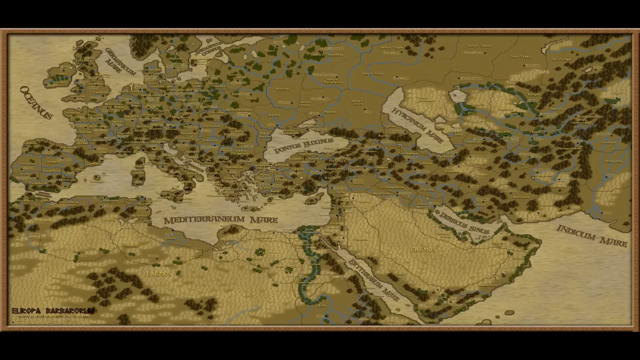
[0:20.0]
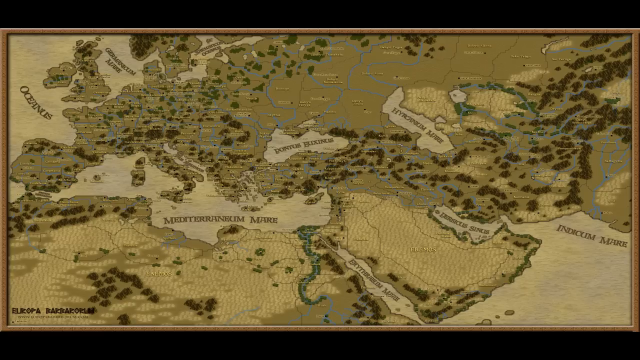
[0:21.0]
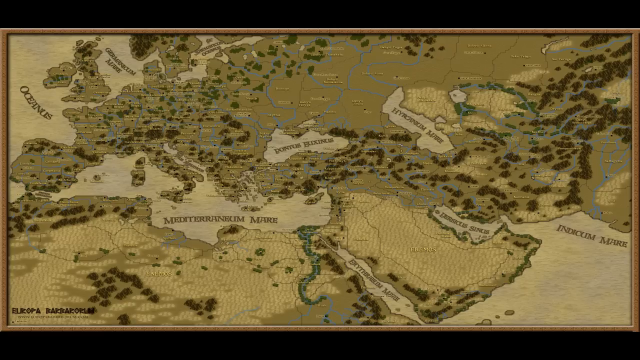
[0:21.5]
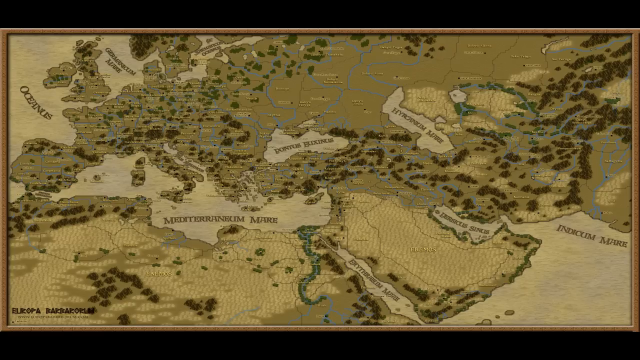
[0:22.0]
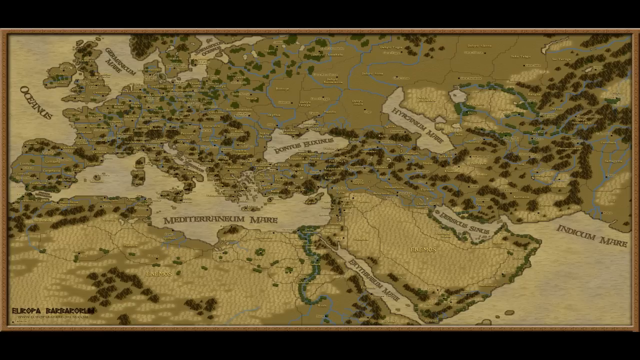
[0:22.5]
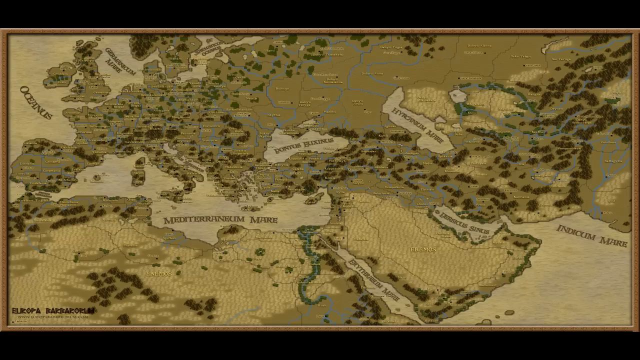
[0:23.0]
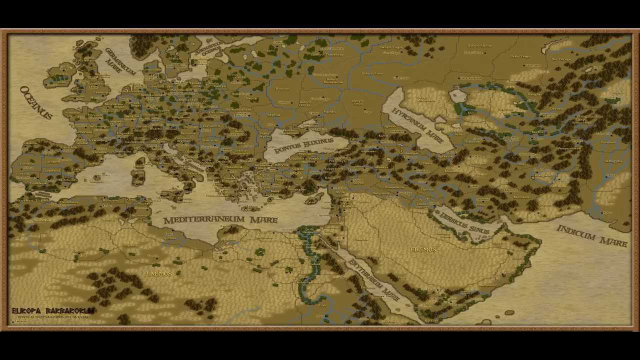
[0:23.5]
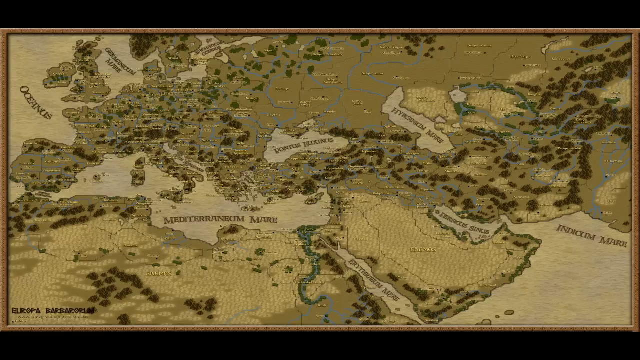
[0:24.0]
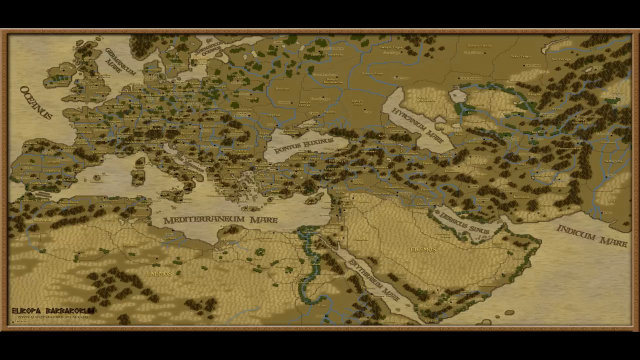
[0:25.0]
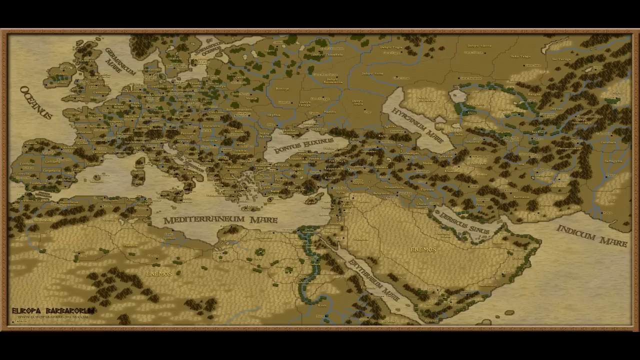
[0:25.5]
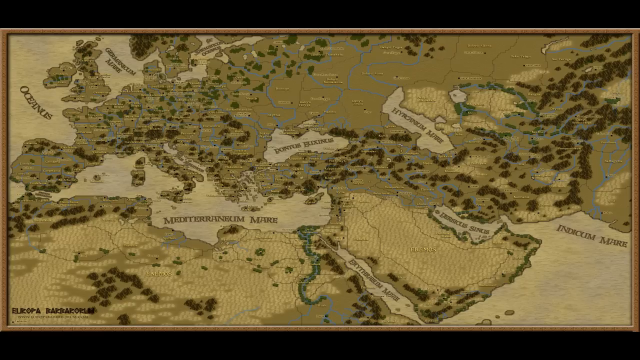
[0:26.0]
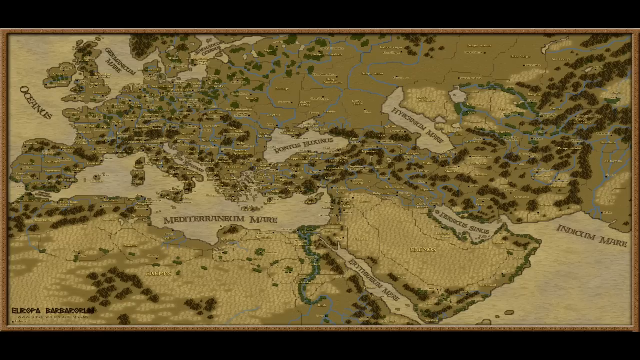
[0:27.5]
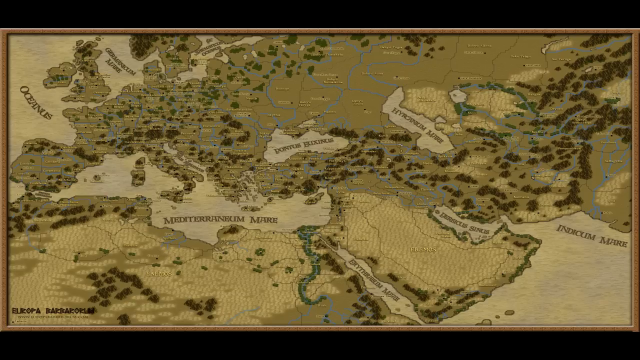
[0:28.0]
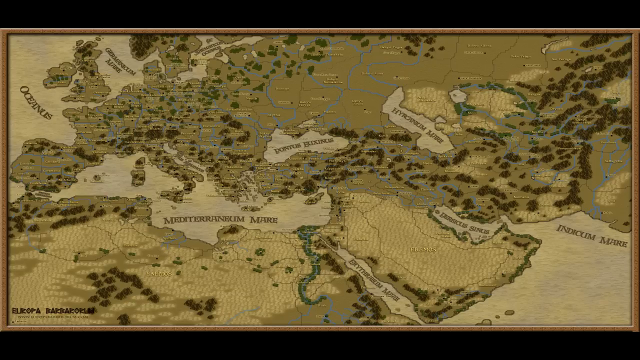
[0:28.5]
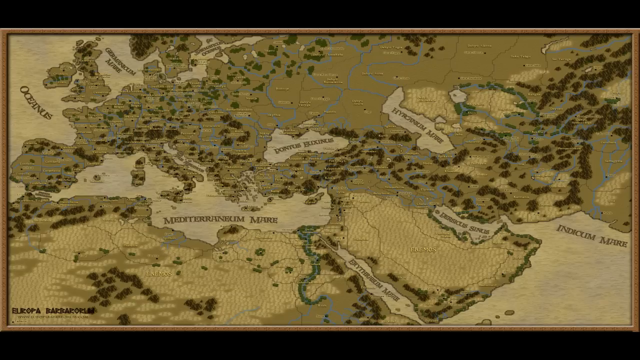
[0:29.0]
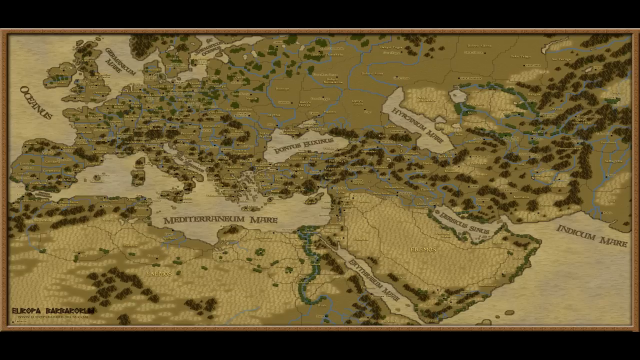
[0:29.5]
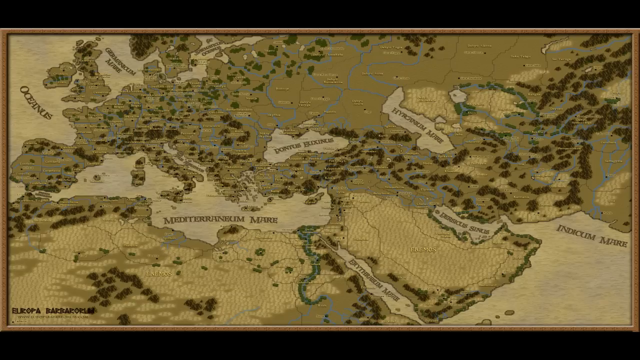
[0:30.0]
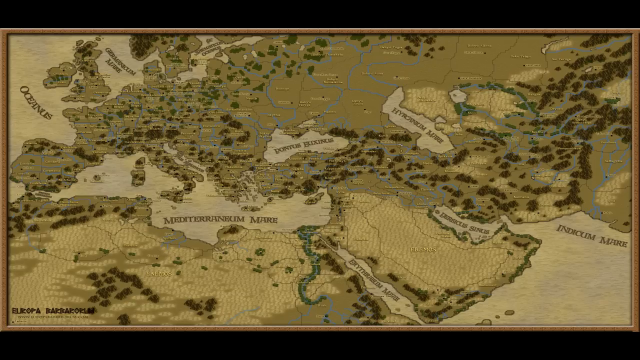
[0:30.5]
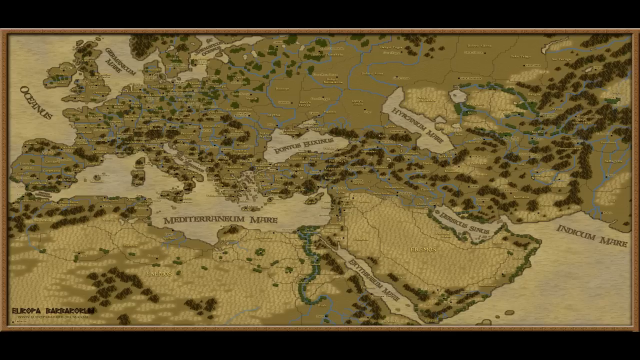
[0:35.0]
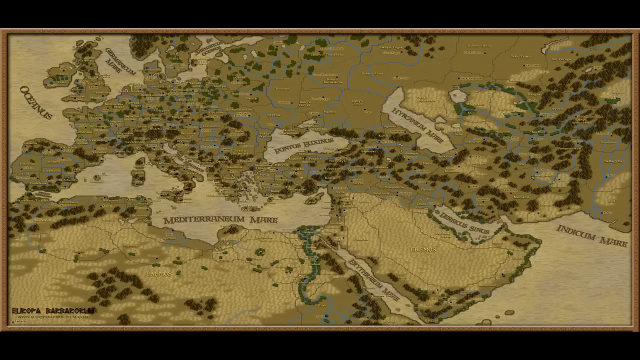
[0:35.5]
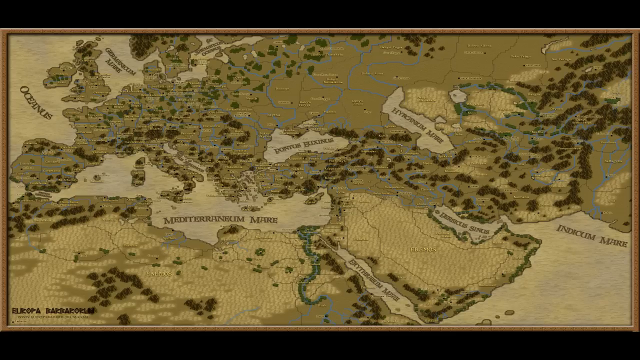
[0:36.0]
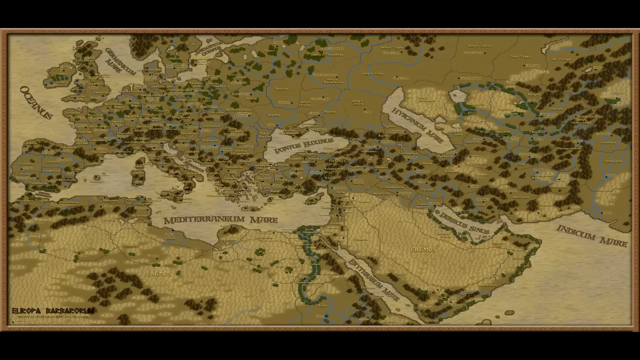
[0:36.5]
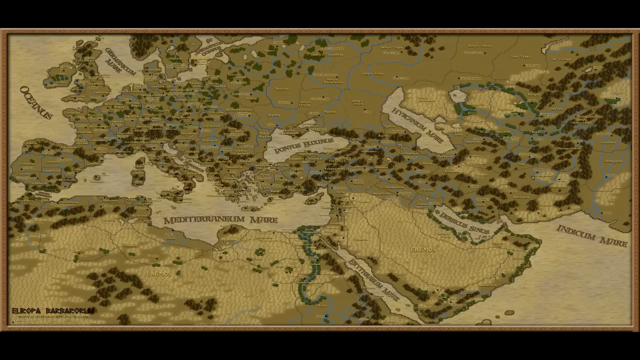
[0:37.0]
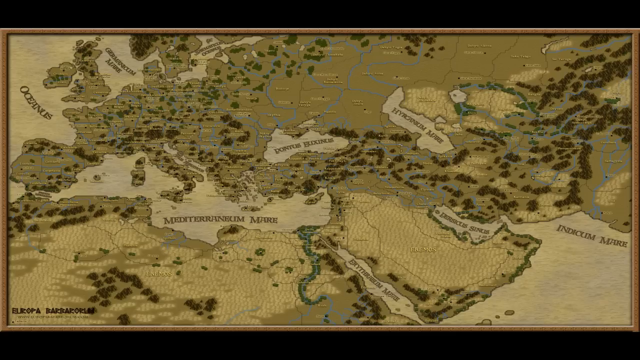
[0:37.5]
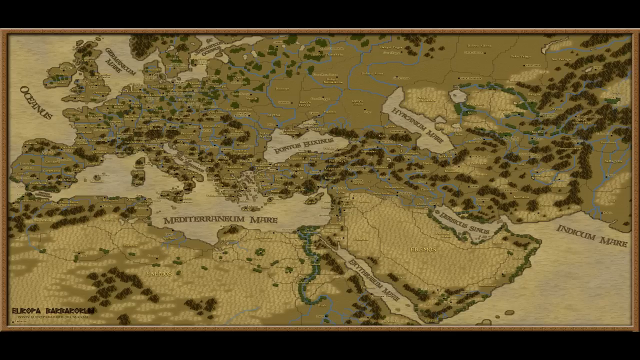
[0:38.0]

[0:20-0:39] The shot does not move. The main focal point is a map of North Africa, Southeast Asia and Europe, apparently showing the different seas and landmass formations. The colors are fairly bland: grays, different shades of beige, green and brown. There appear to be mountain ranges and trees shown in different oceanic areas of the map, seemingly highlighting the countries that have mountain ranges or greenery in their region. The image stays on the map and does not move or transition.